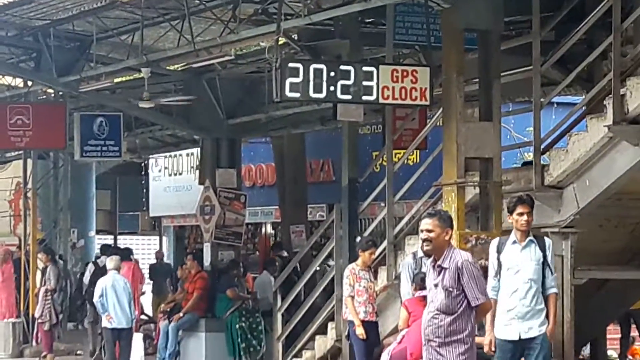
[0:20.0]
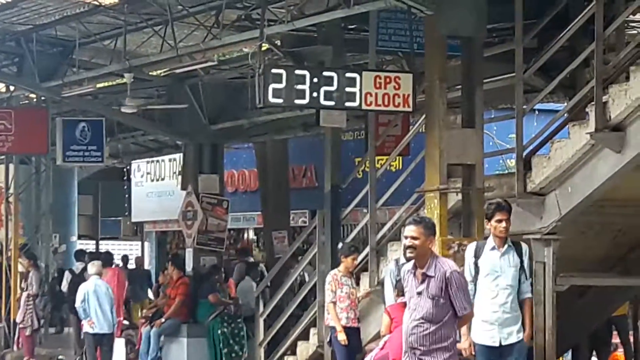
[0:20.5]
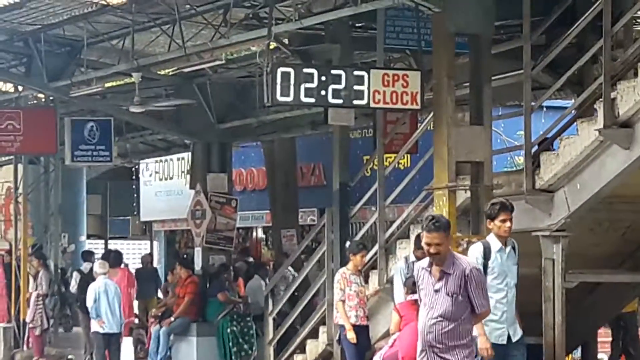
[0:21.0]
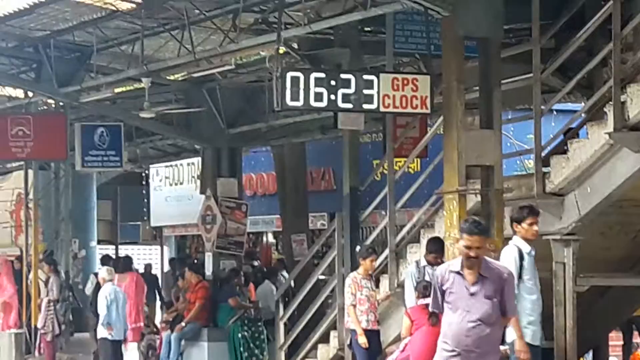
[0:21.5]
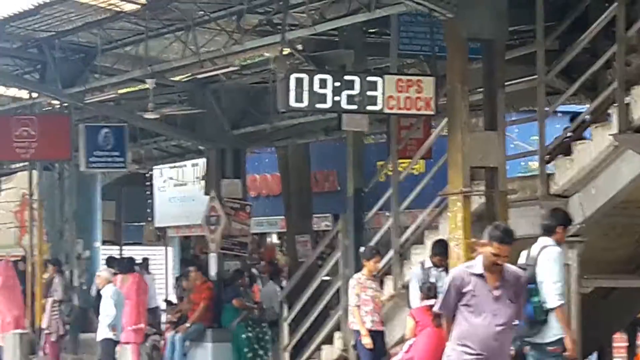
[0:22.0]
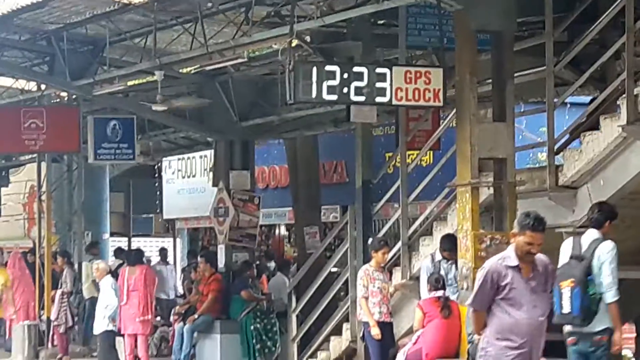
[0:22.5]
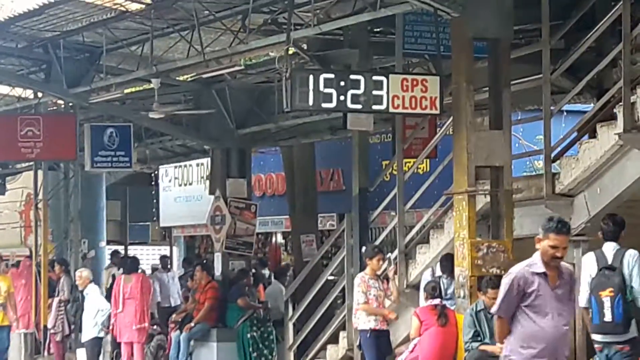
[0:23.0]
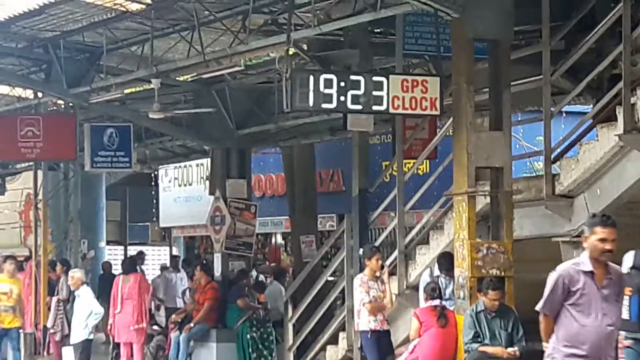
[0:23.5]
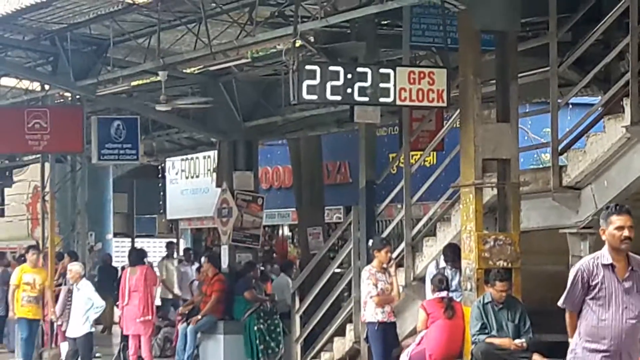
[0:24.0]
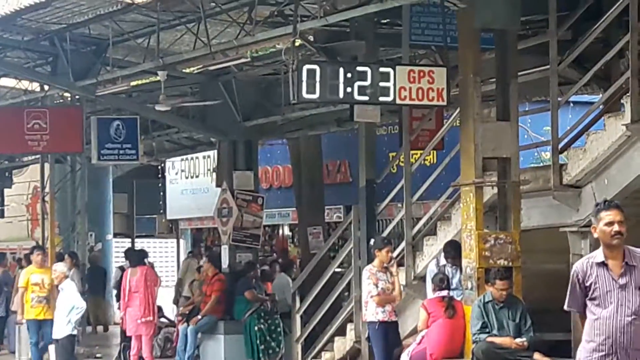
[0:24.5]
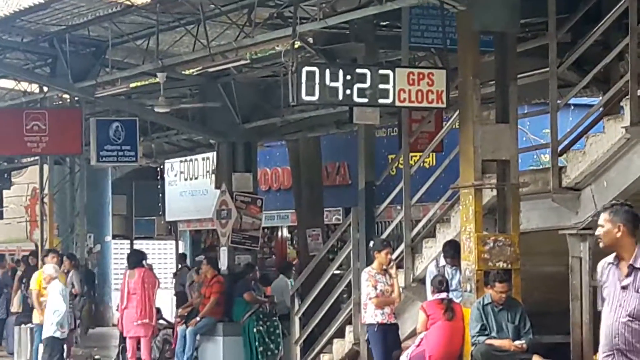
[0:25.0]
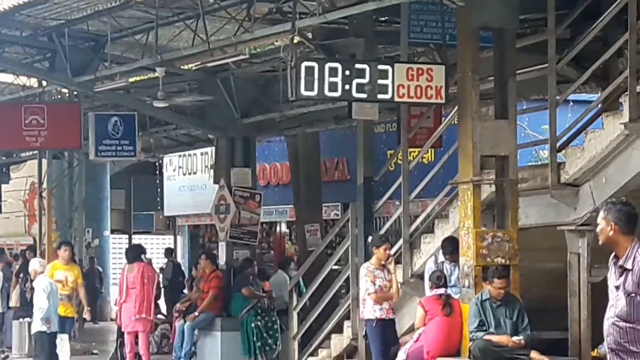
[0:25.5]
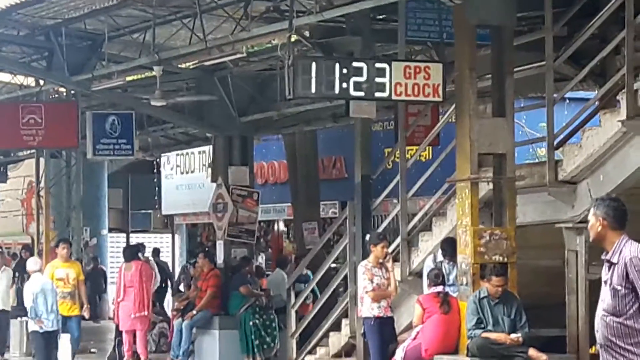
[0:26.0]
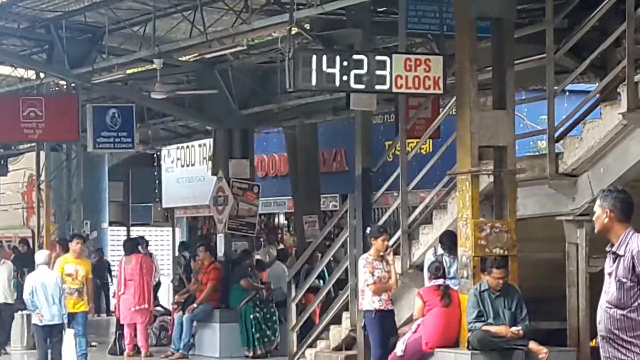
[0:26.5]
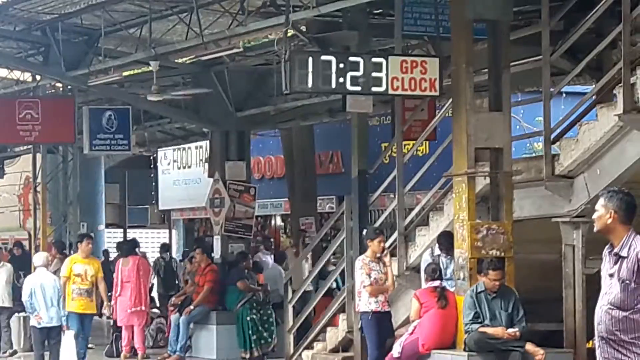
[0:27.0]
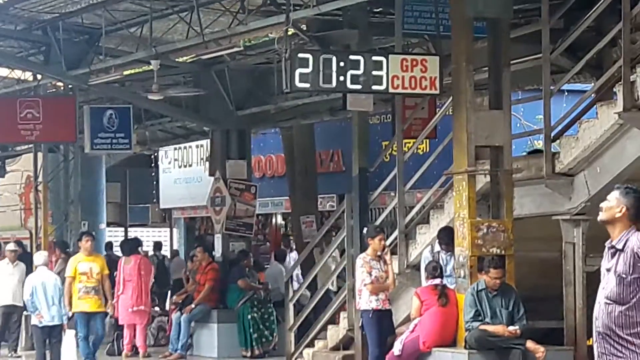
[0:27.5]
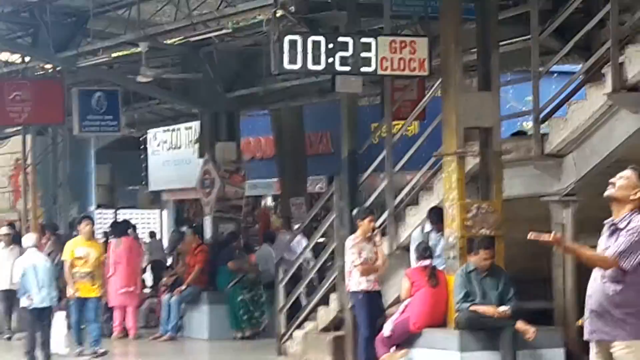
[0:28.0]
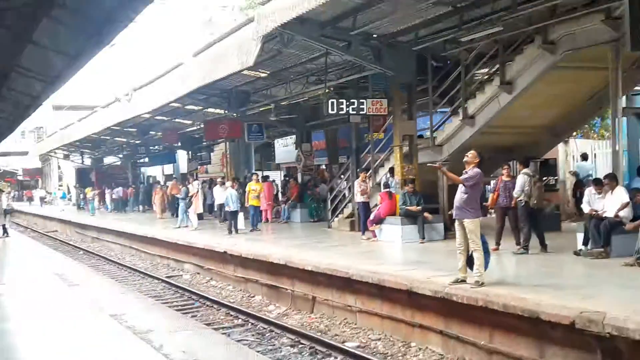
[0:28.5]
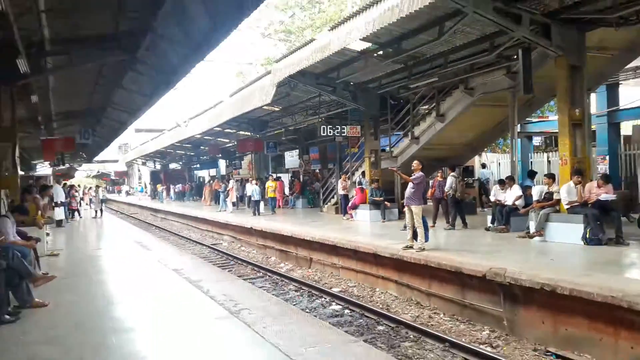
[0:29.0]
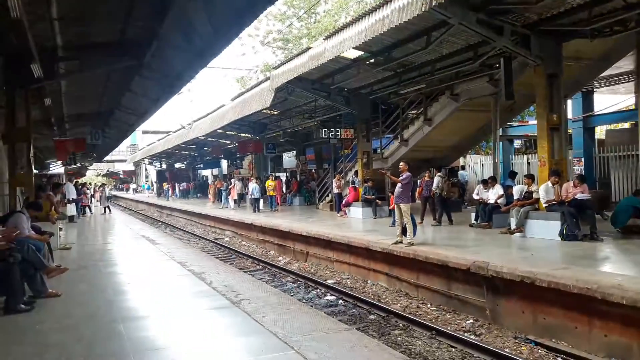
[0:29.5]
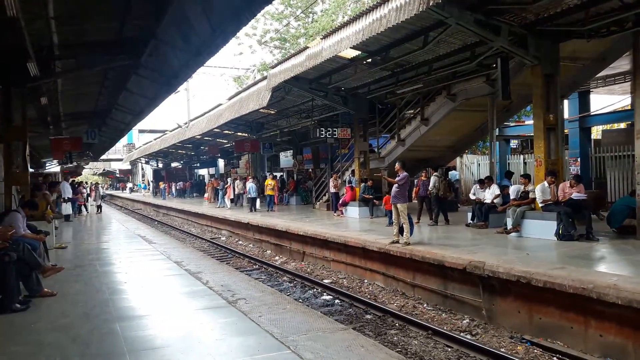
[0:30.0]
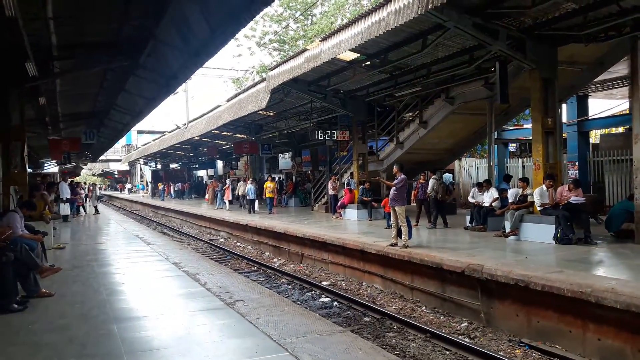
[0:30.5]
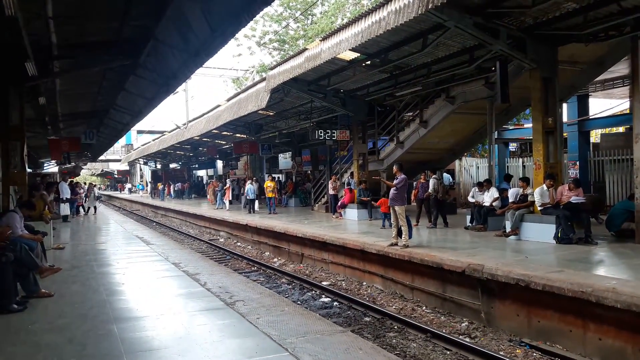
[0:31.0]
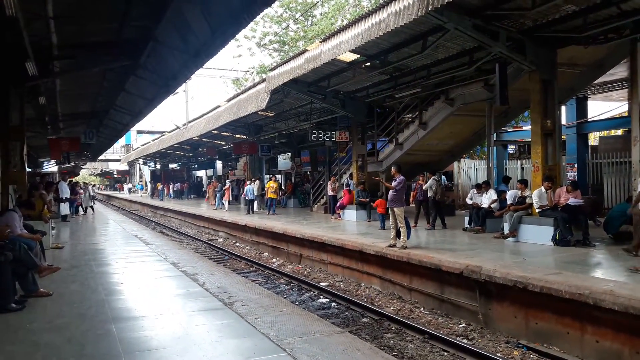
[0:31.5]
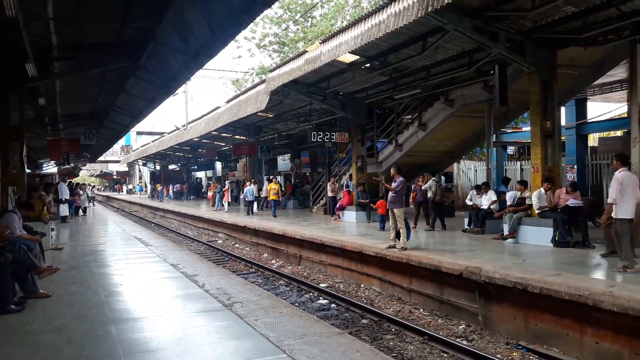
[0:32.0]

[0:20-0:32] People continue to move about, sit, and walk around. The GPS clock appears to keep changing the hour, going from 01 up to 23 and then back to 1, with the minutes staying at 23. A man in a purple button-down shirt with white stripes is standing, and at the end of the video he holds out his left hand, almost as if he may be checking whether it is raining. The view zooms out to show both areas along the tracks, with people waiting to get onto what looks like a train.